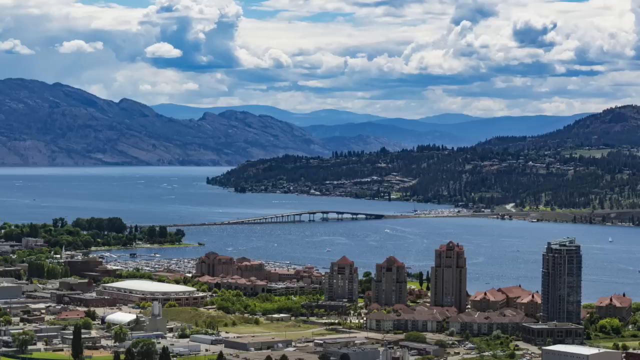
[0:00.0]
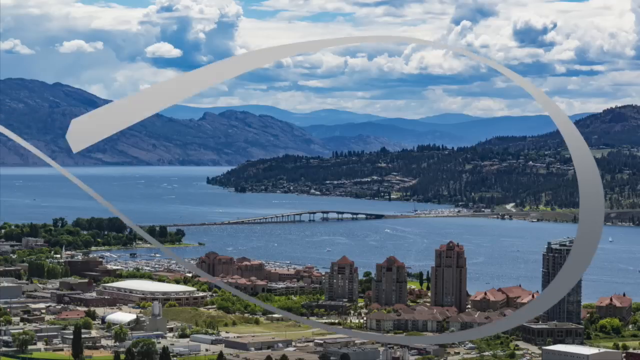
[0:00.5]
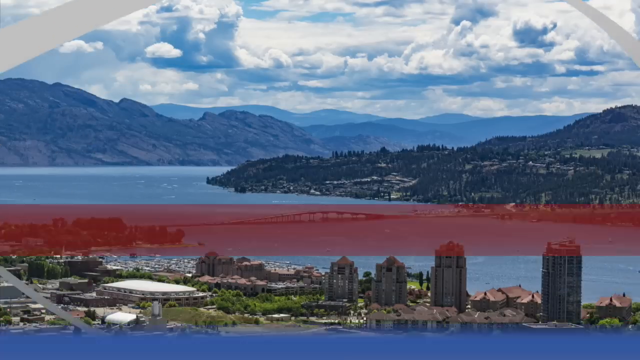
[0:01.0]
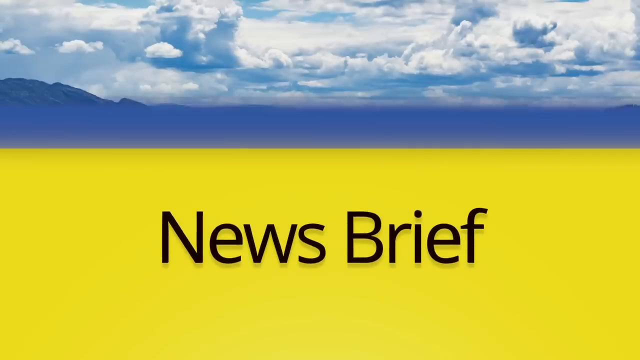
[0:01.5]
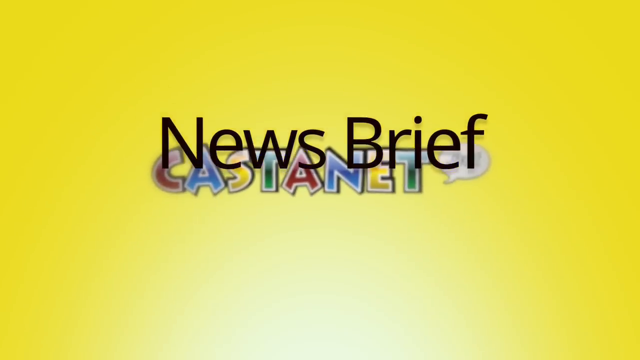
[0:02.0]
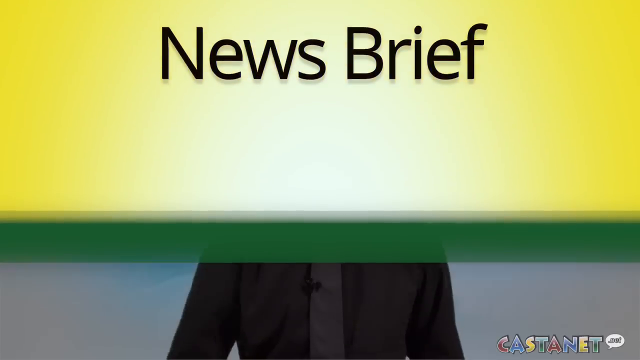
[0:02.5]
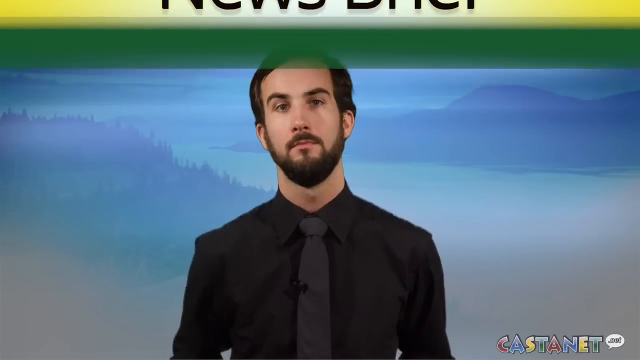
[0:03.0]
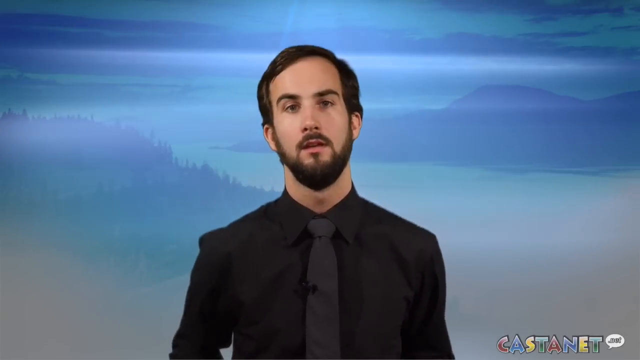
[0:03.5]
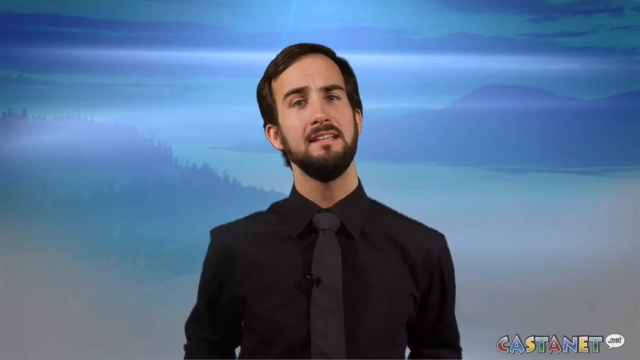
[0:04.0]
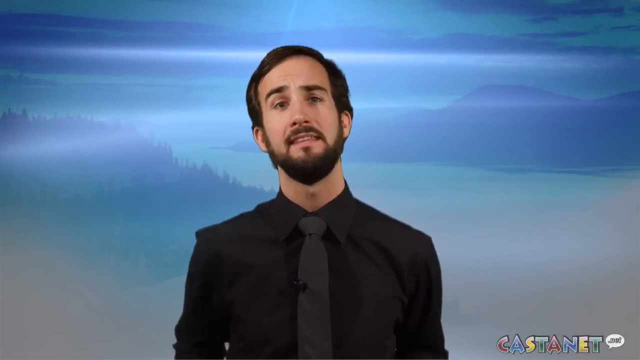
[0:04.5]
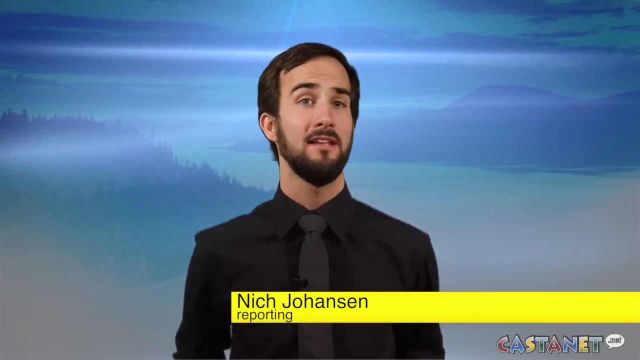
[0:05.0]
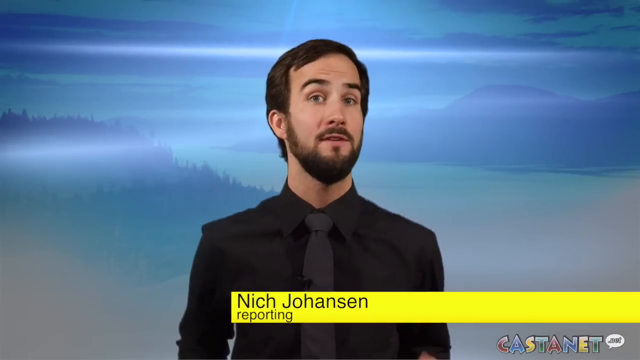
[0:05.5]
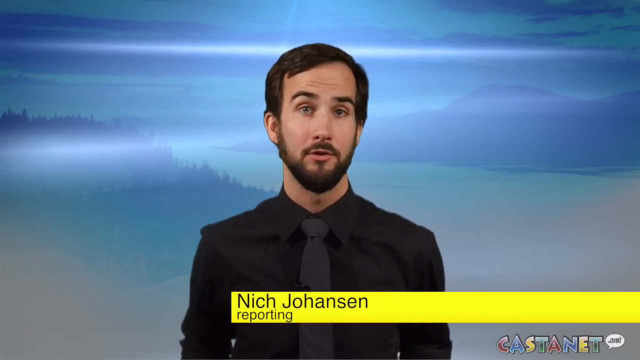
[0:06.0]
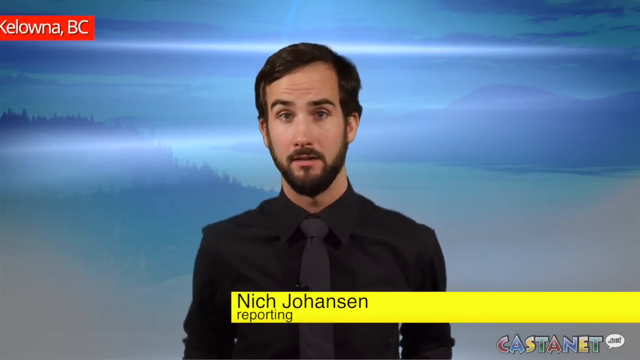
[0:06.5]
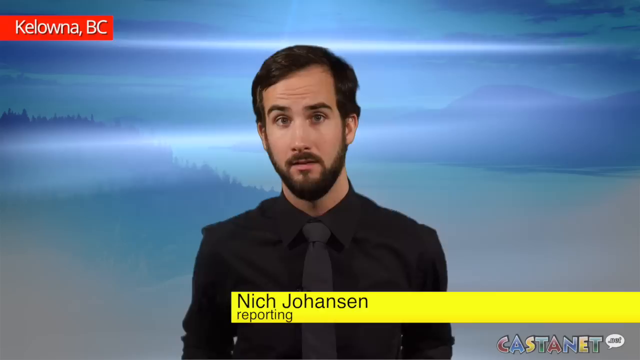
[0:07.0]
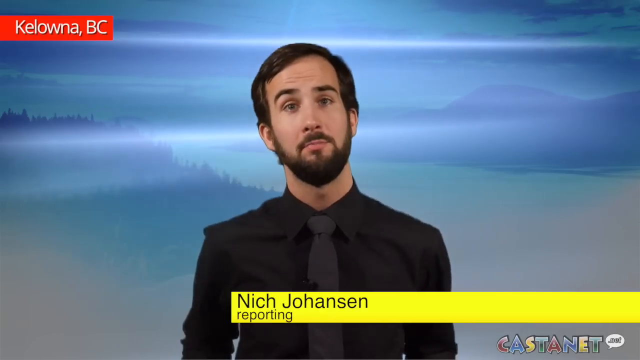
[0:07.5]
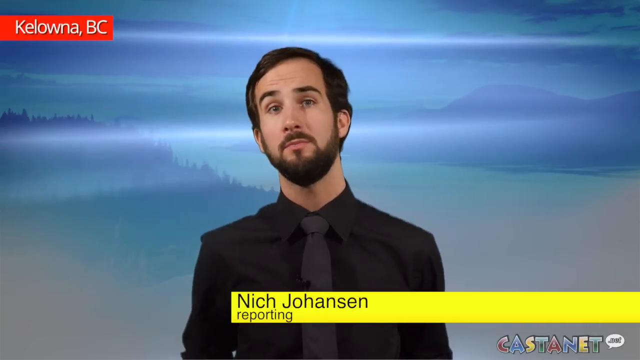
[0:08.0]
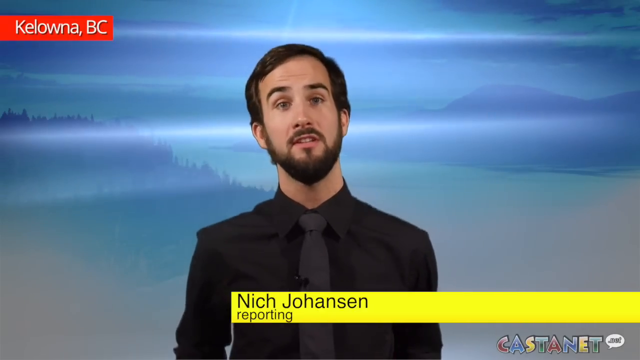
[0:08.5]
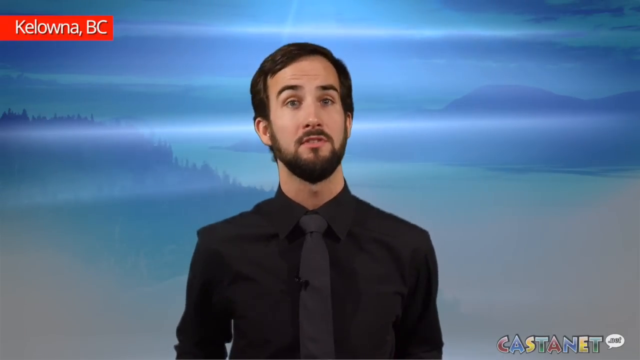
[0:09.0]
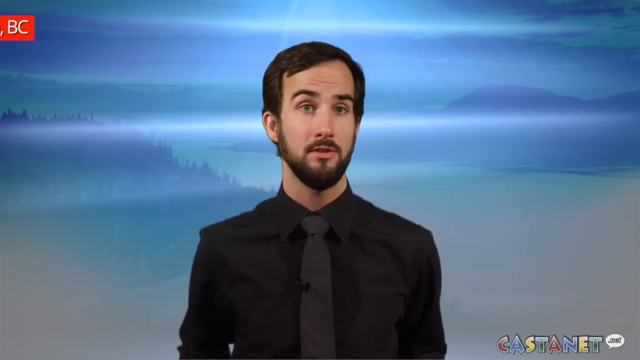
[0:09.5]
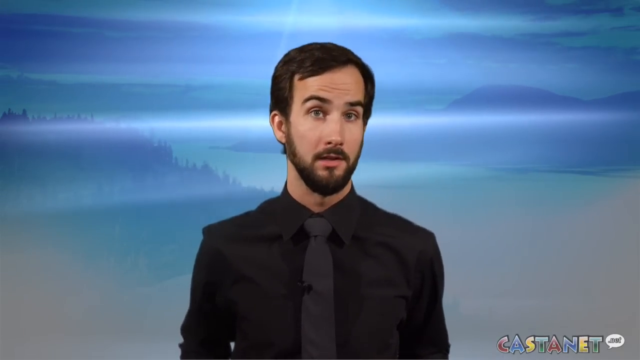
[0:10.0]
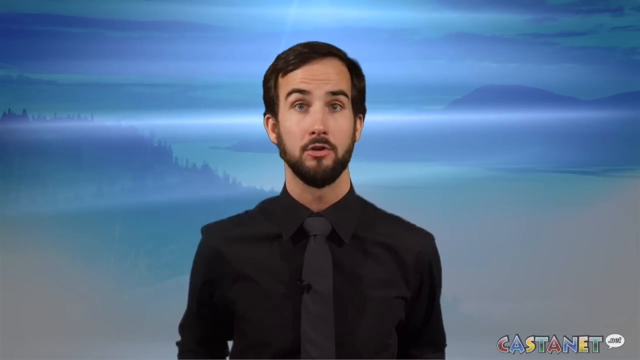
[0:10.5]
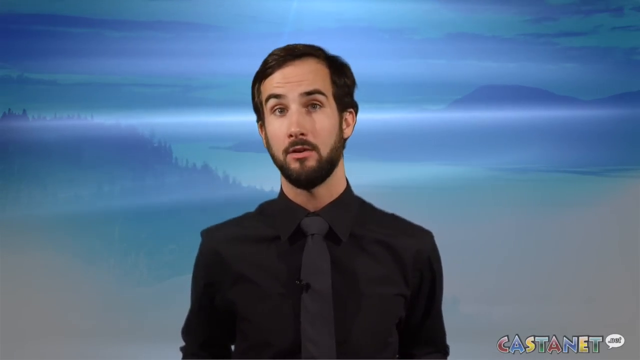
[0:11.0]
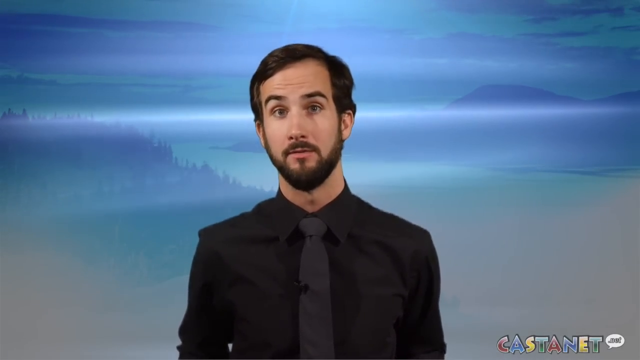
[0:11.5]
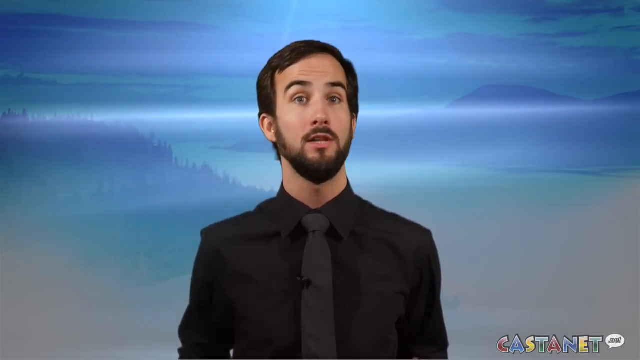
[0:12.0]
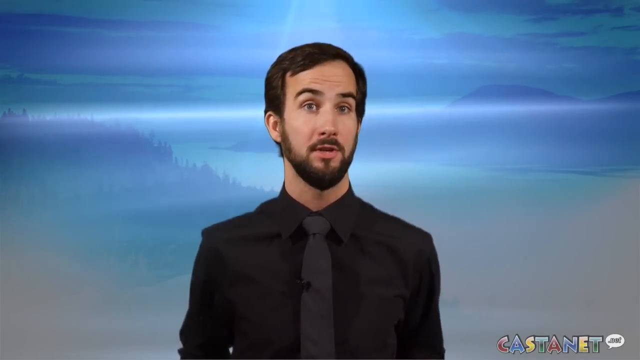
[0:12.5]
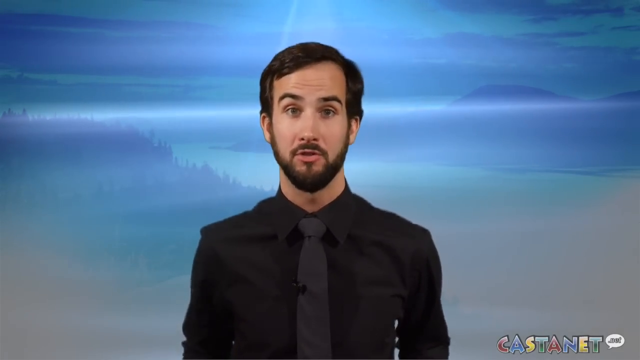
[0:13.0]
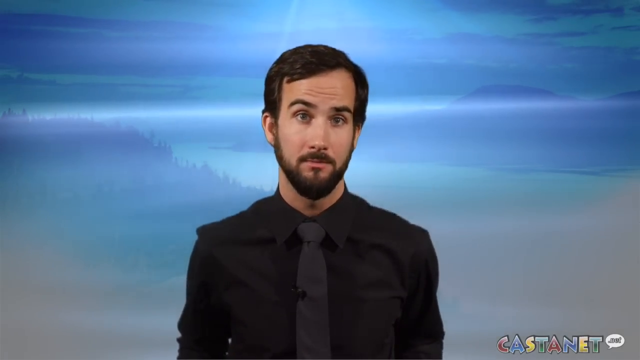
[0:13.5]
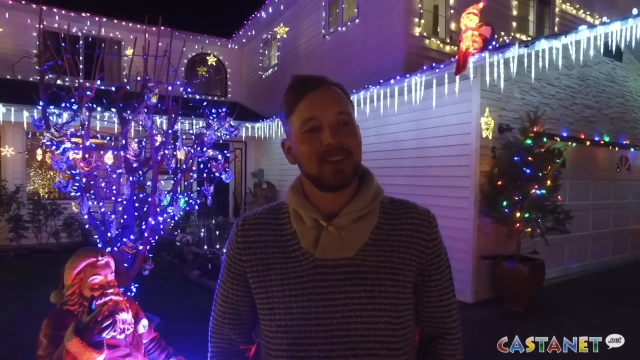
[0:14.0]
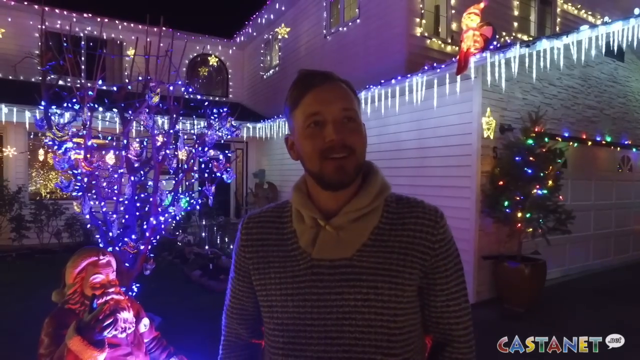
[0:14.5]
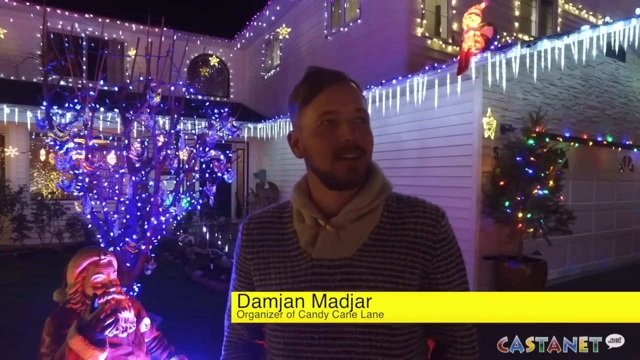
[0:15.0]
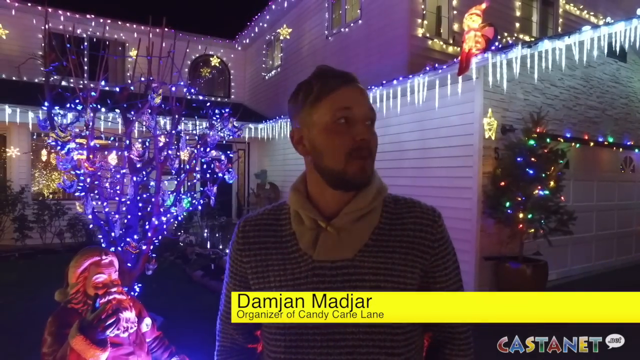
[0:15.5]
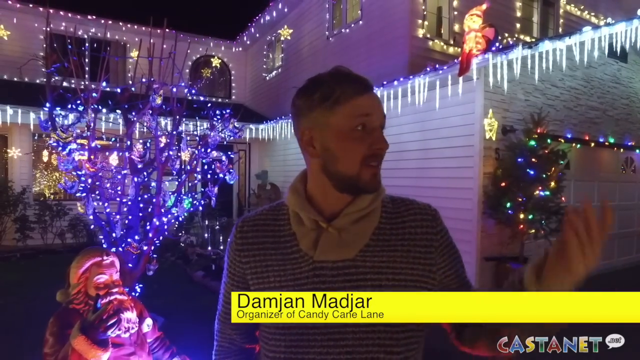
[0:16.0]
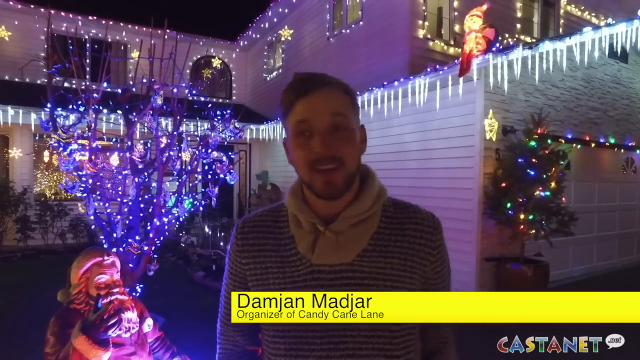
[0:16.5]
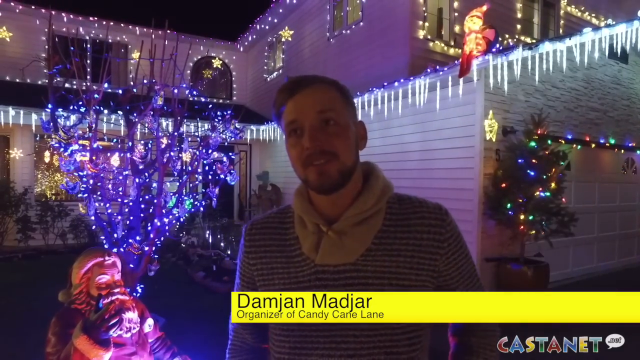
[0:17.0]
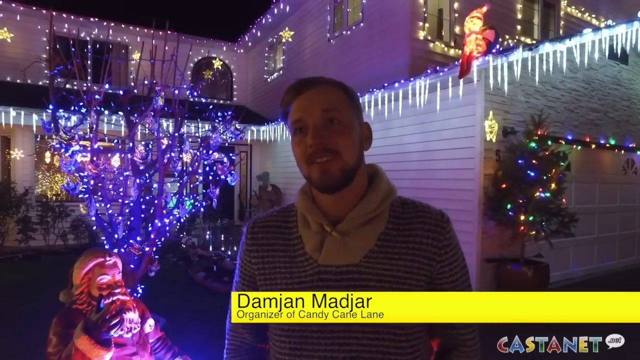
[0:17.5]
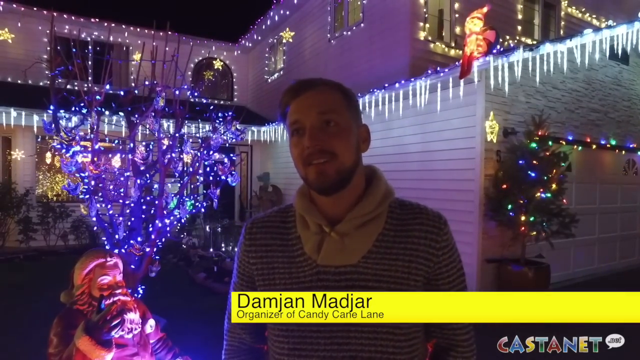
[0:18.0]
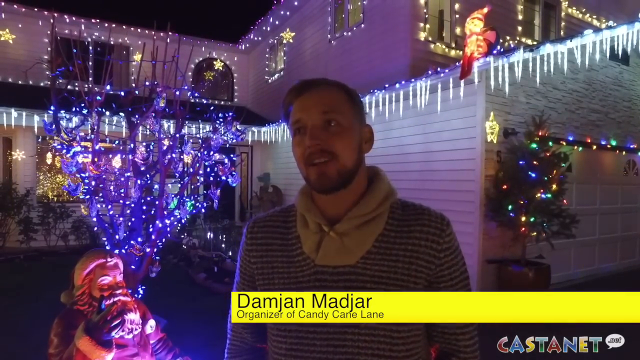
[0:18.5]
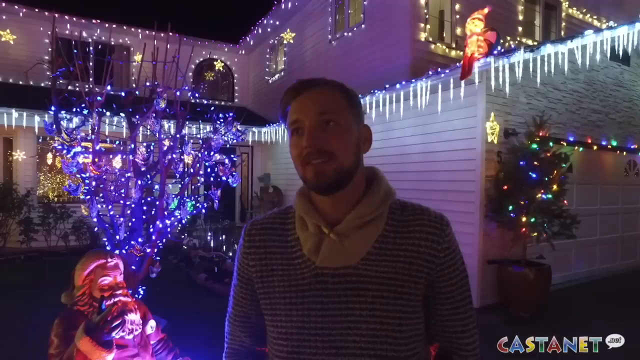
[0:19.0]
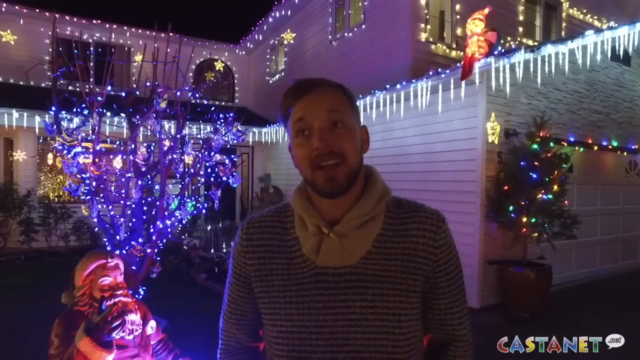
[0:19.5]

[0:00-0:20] The video opens on a lot of puffy clouds in the background, some mountains, and a very large body of water, apparently a river rather than an ocean, with a bridge that goes from one part of land to another part separated by the water. Some buildings are visible on one side, while the other side looks more like mountains. Then "news brief" flashes in yellow, and a man, Nick Johansson, is reporting. He wears a black shirt and black tie, has a beard and mustache, talks very fast, and moves his head really fast. The view then goes to a man with shorter hair who has Christmas lights behind him. The news briefing graphic goes up, yellow and then green, and once it goes away the news reporter is visible; behind him there seem to be mountains and trees, but they are blurred out so they cannot really be seen. The man talking has a yellow scarf wrapped around his neck and some Christmas lights on a building behind him, and he smiles very wide while he talks.